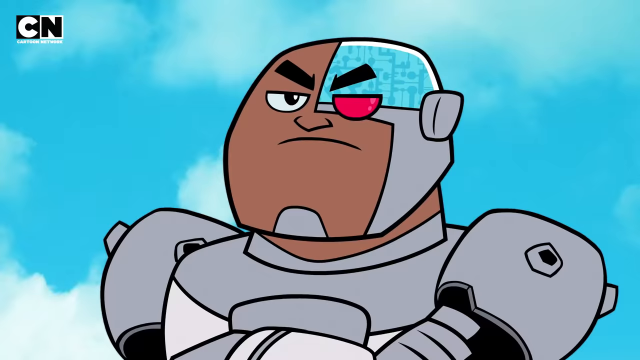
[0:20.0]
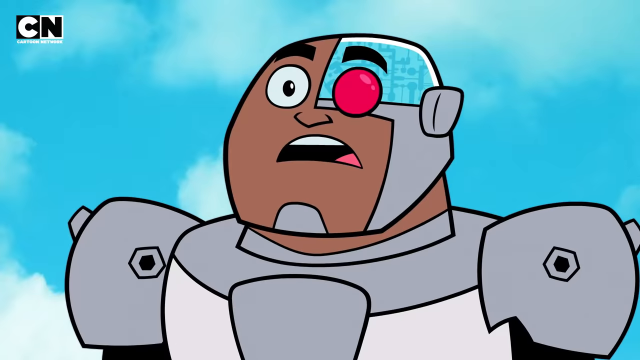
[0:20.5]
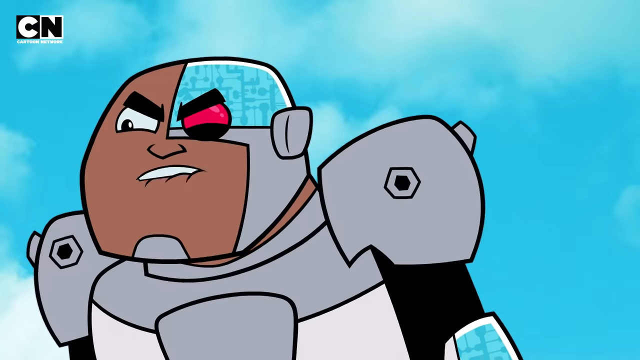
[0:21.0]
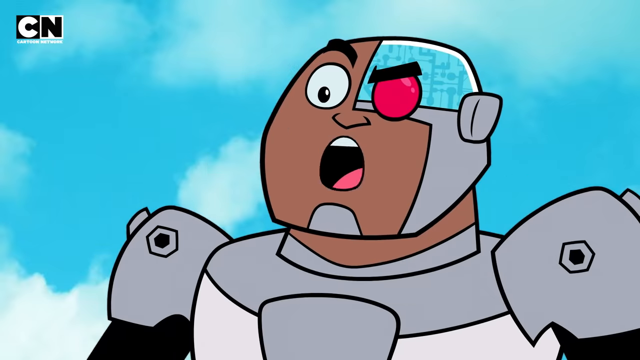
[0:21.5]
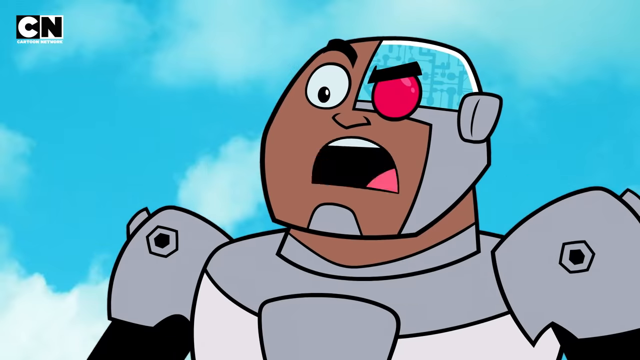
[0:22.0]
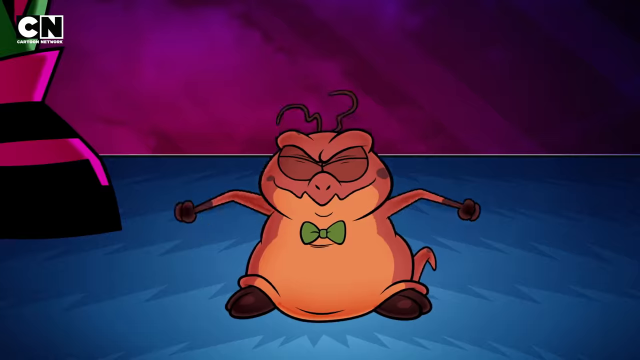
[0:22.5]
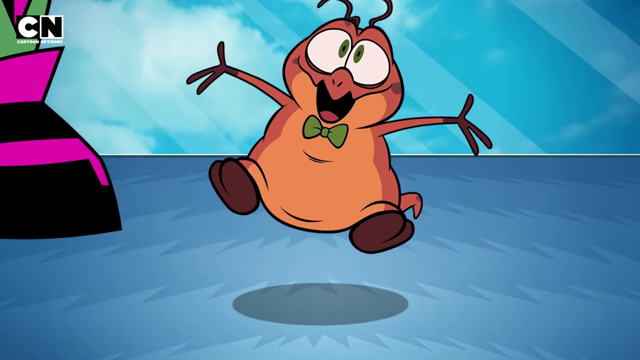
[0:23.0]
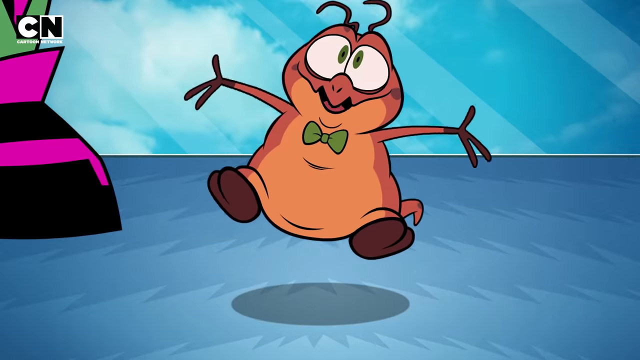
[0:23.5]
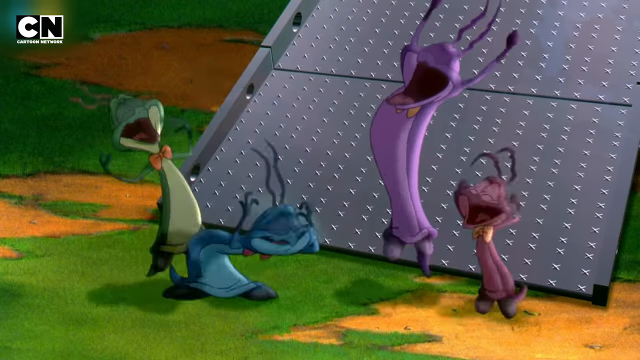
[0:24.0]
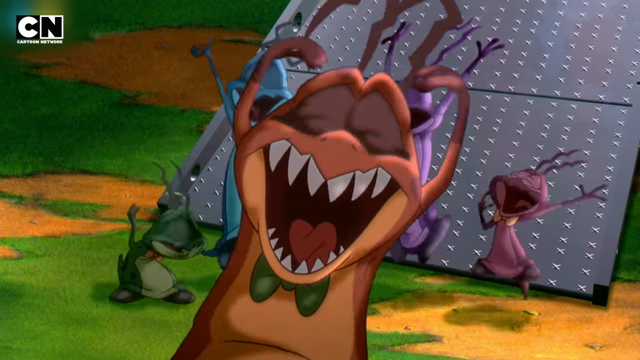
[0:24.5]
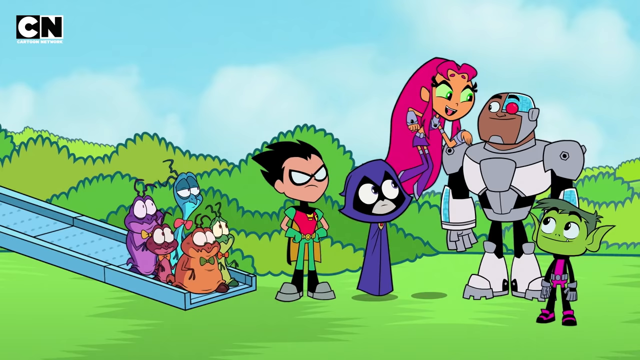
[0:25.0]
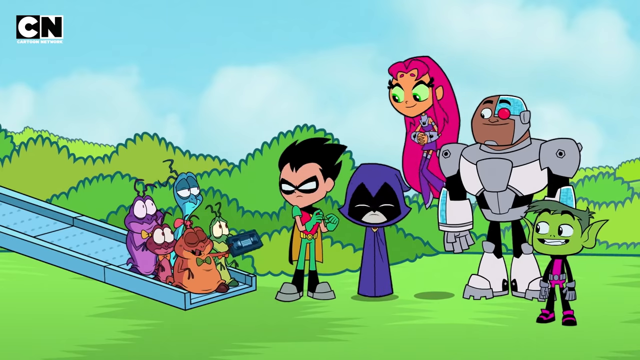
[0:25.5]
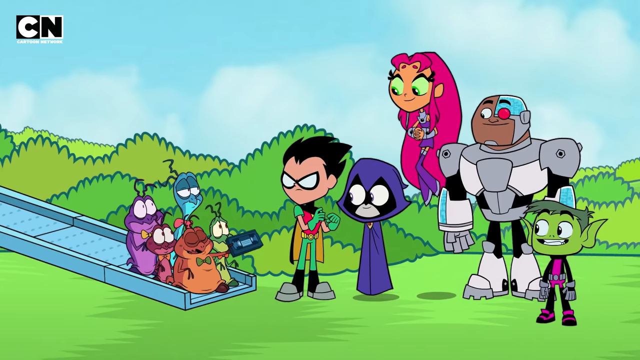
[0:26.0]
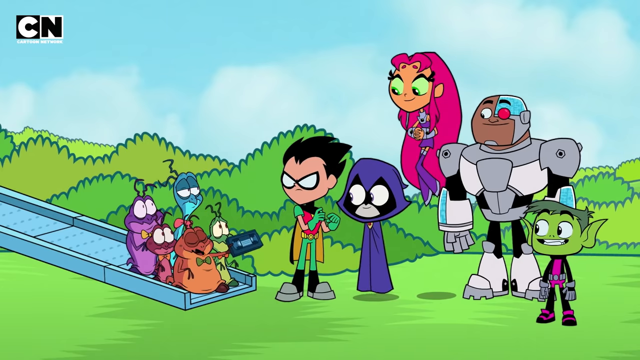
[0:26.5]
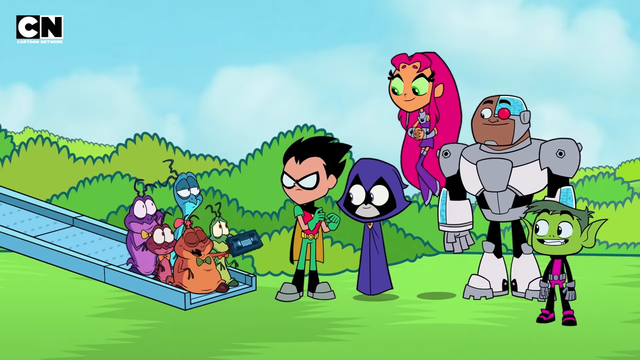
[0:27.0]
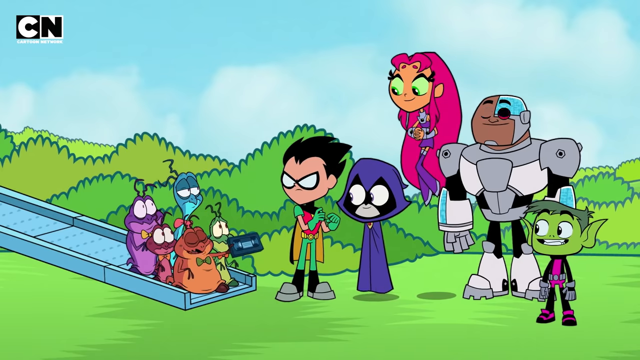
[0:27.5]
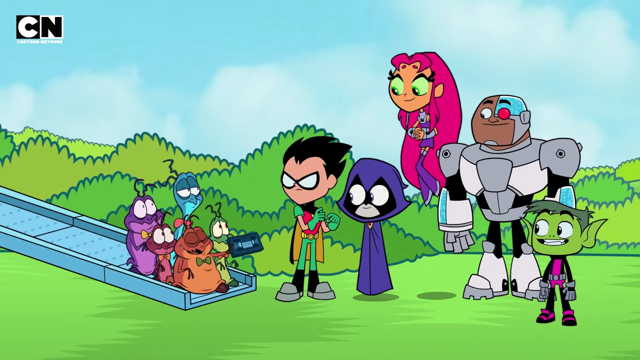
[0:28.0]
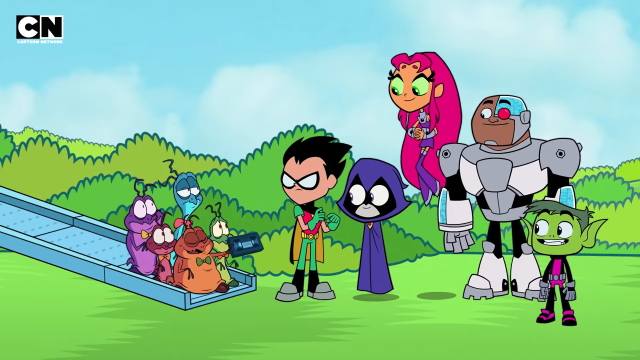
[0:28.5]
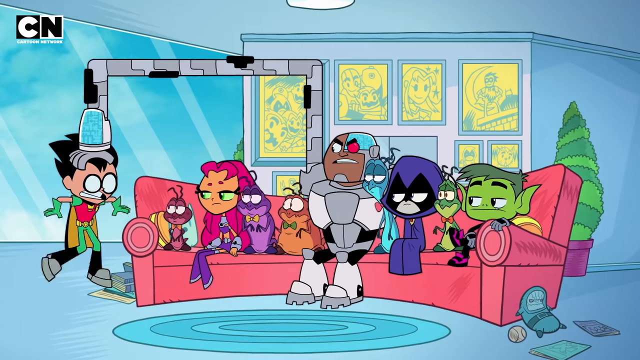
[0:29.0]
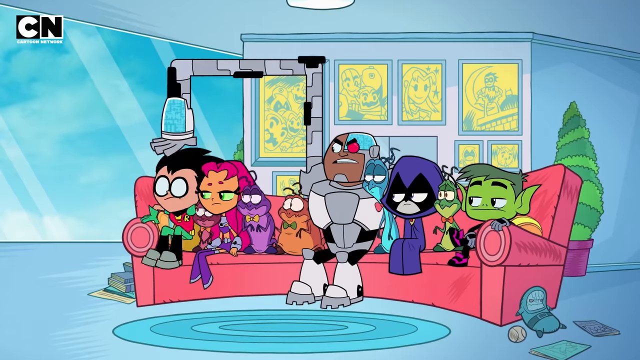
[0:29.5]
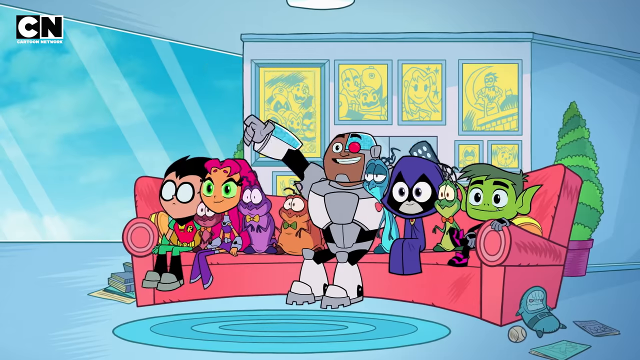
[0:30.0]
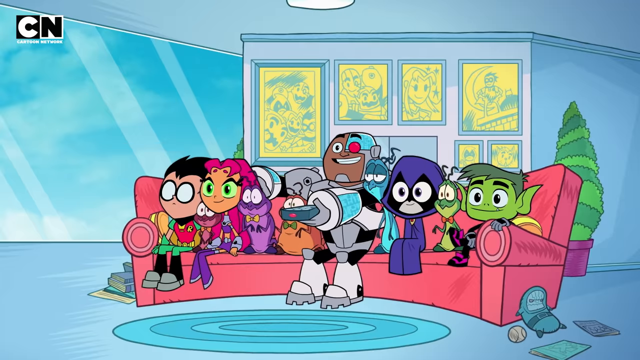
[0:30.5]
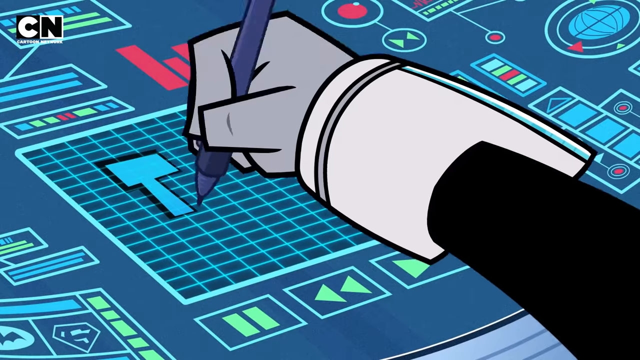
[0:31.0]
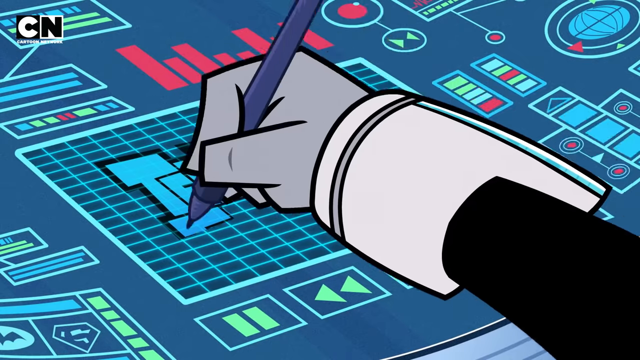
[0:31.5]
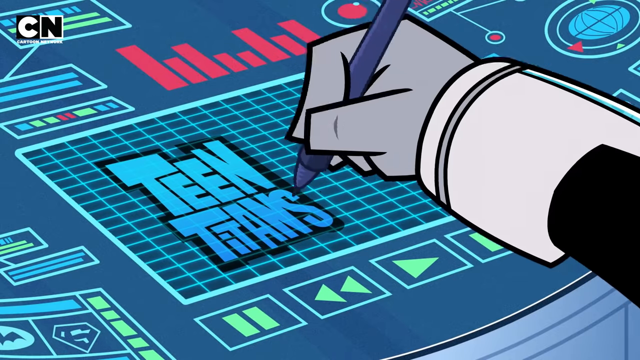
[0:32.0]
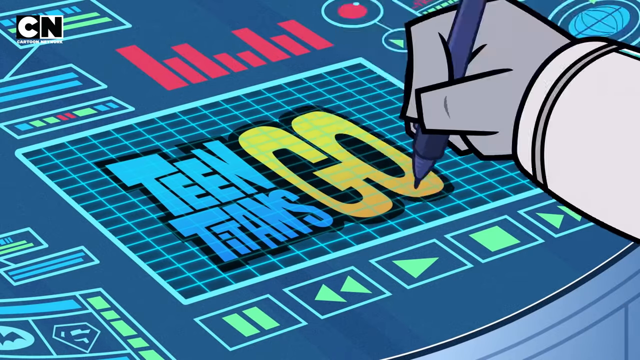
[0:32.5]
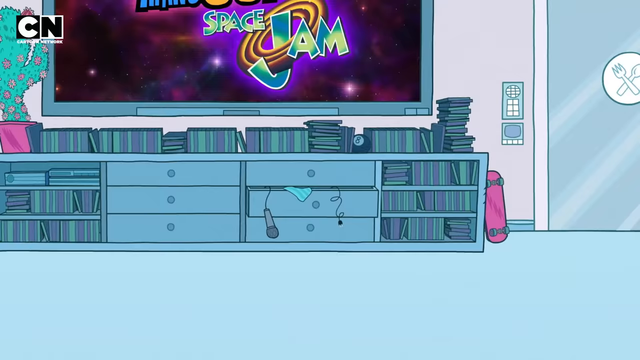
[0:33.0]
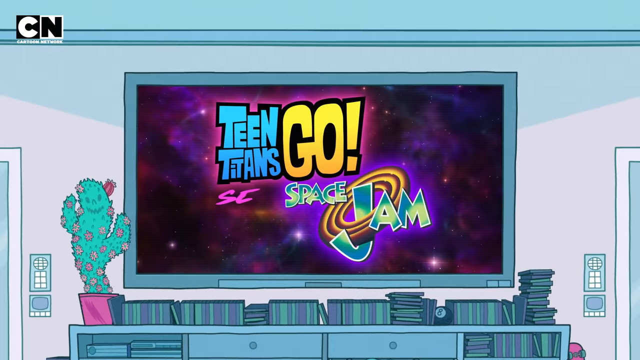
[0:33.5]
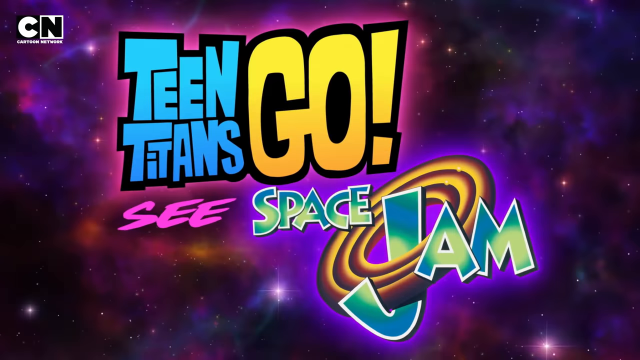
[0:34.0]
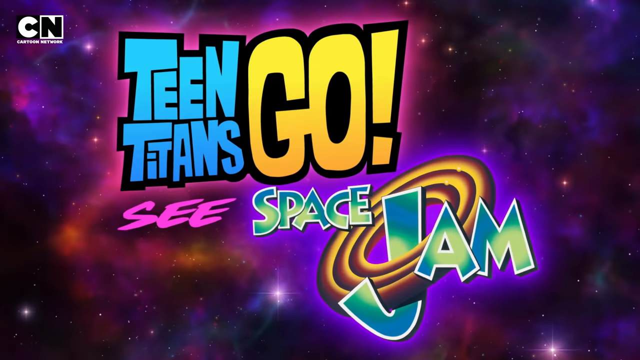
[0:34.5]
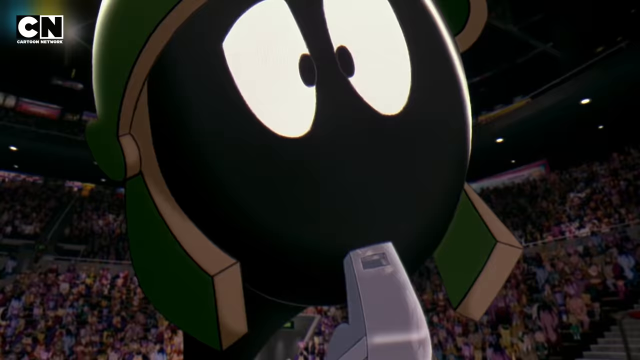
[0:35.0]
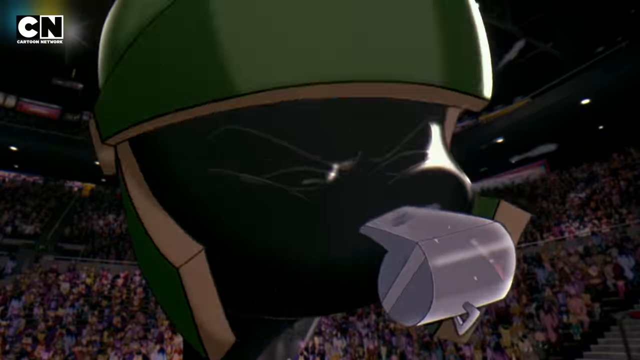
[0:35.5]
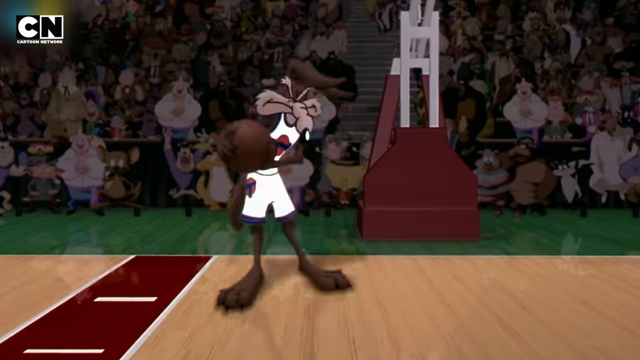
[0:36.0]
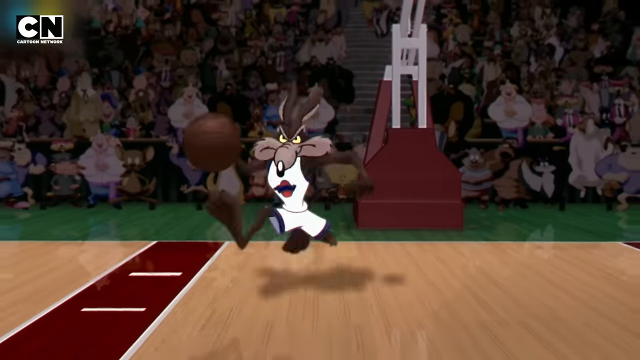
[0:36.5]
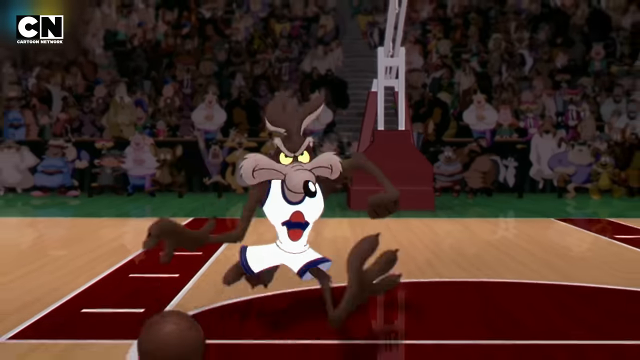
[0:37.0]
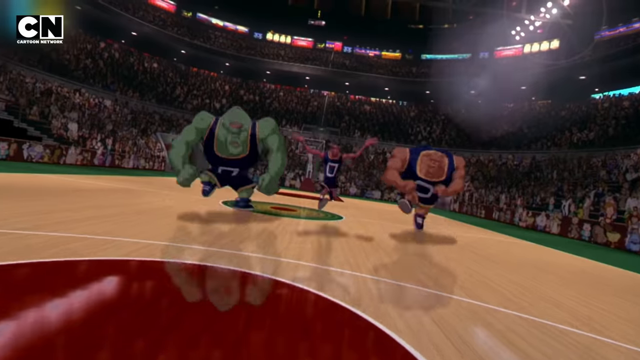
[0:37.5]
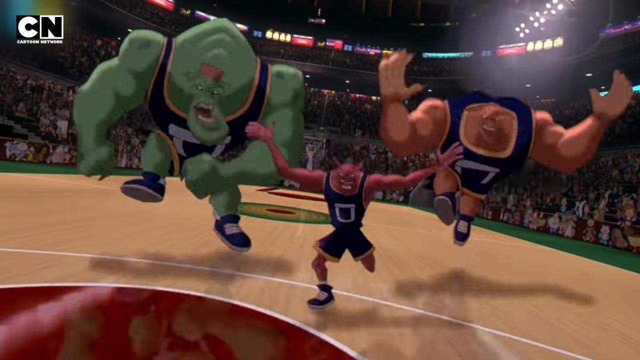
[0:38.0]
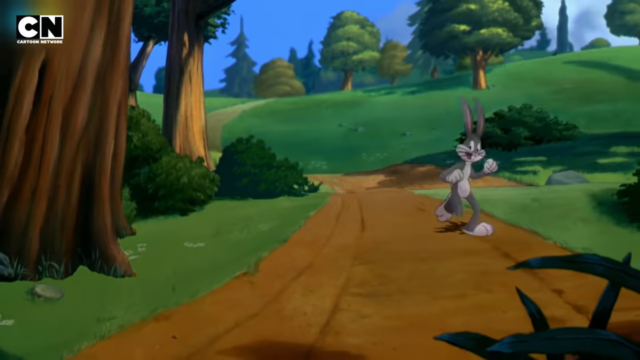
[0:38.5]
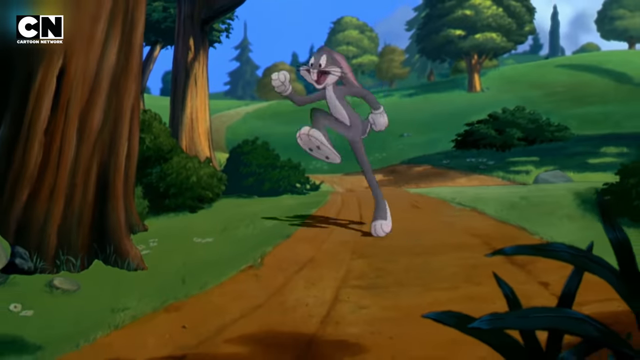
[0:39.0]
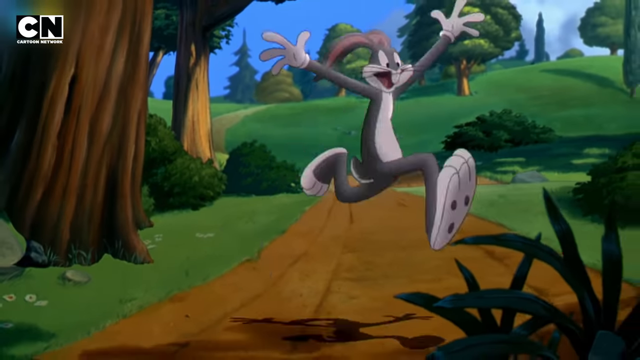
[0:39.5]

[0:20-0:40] The CN Cartoon Network logo is in the upper left corner of this series of cartoon images. A group of characters appears, one of whom looks robotic: he has a robot body, and half of his face is covered in metal, with a red eye where his eyeballs should be. A little bug-like character is shown with four other bug-like characters jumping up and down and waving their arms. The five bug-like characters then sit on the edge of a metal ramp, holding up a VHS tape to another group of characters who all look like superheroes: the robot man, a little green person with pointy ears who looks like an elf, a girl with long pink hair floating above the group, a little character in a purple hood and robe, and a character who looks like Robin from Batman. The bug character waves the VHS tape at the group, and then they are all seated on a curved pink sofa, getting ready to watch the tape. The robot character writes "Teen Titans Go" on what looks like an iPad, and then a large-screen TV on a wall shows "Teen Titans Go see Space Jam". Footage follows that looks like a character in a Roman helmet playing basketball with Wile E. Coyote, and then Bugs Bunny hops down a path in the woods.